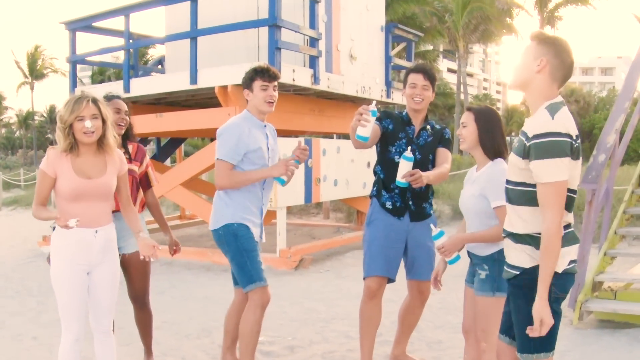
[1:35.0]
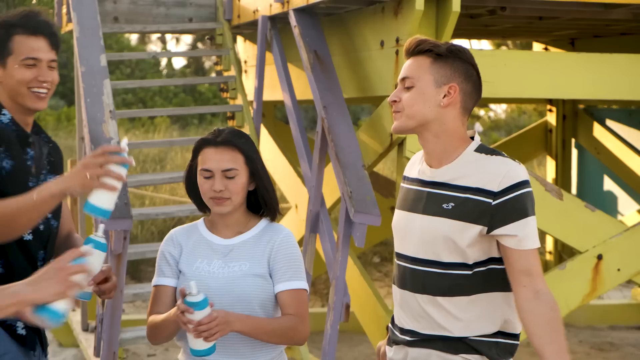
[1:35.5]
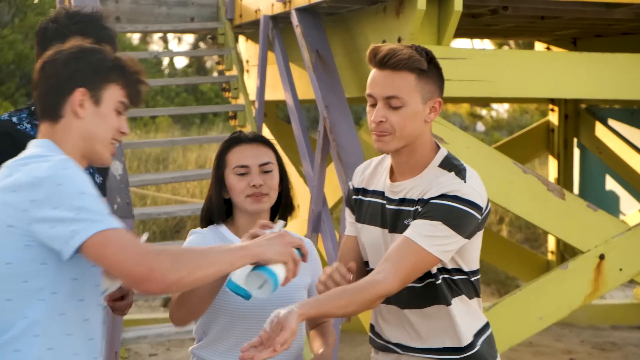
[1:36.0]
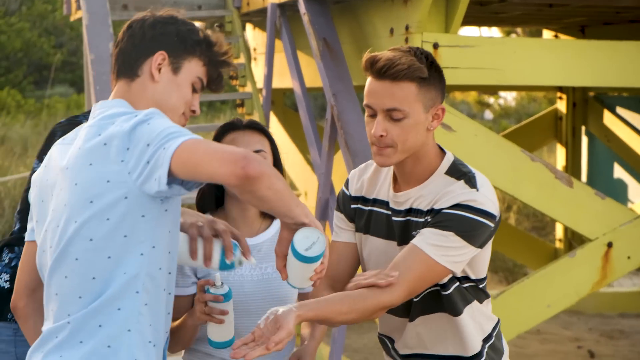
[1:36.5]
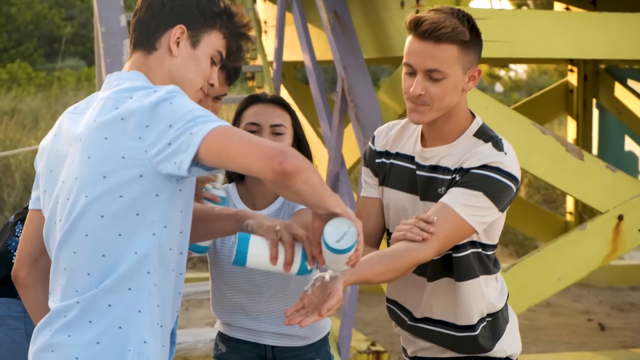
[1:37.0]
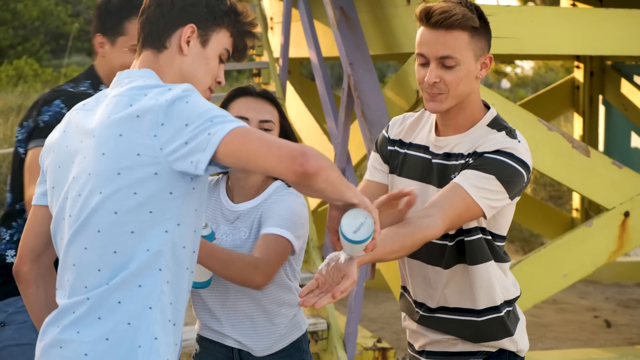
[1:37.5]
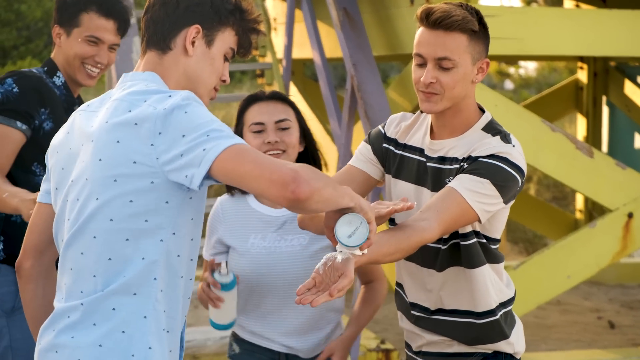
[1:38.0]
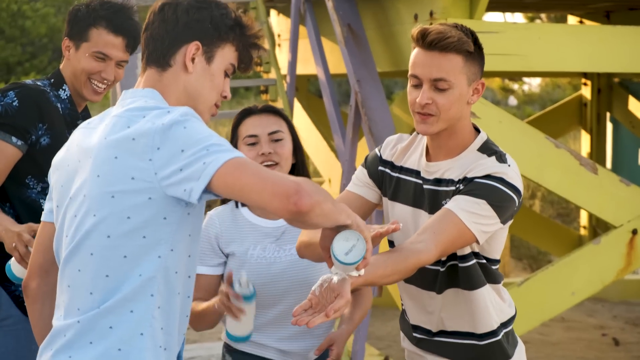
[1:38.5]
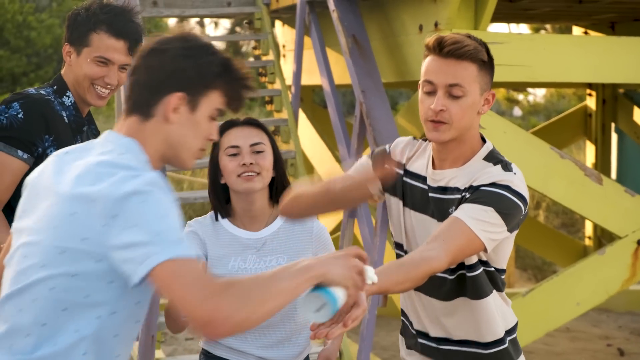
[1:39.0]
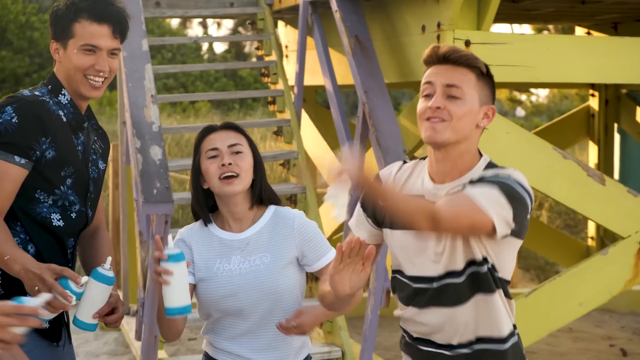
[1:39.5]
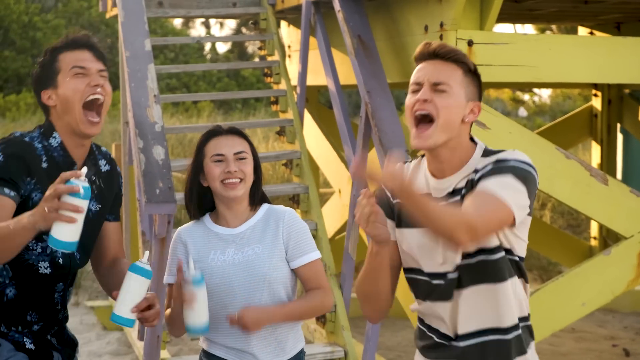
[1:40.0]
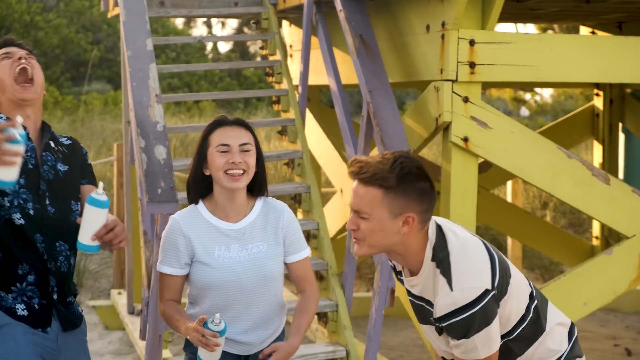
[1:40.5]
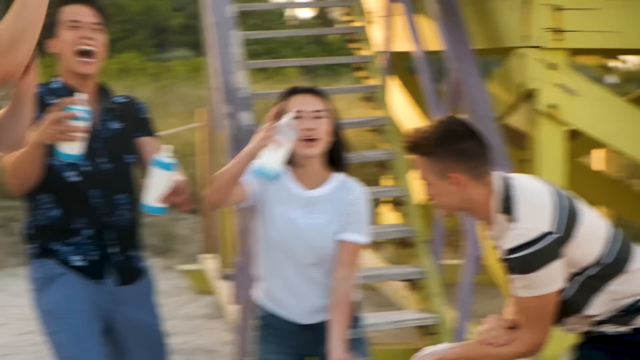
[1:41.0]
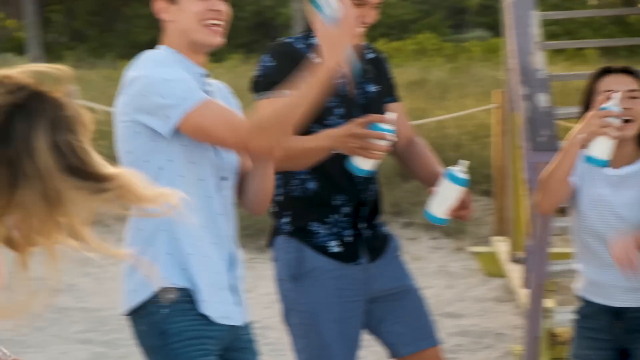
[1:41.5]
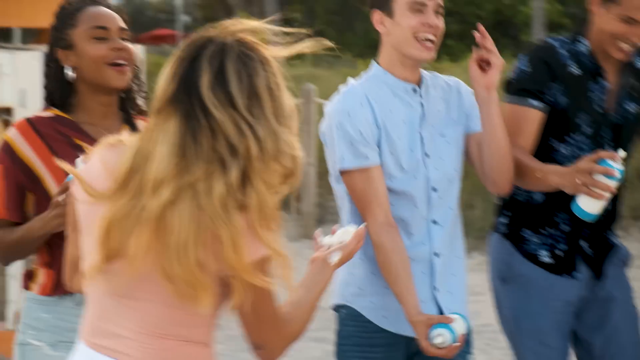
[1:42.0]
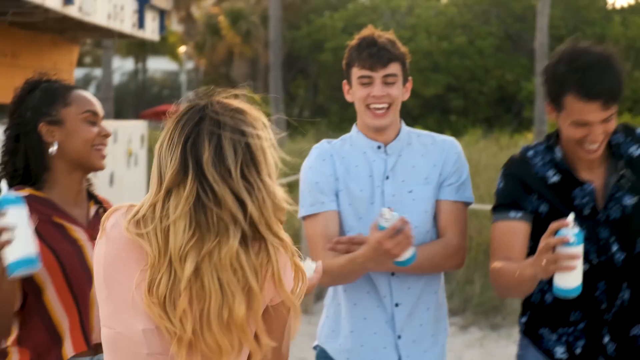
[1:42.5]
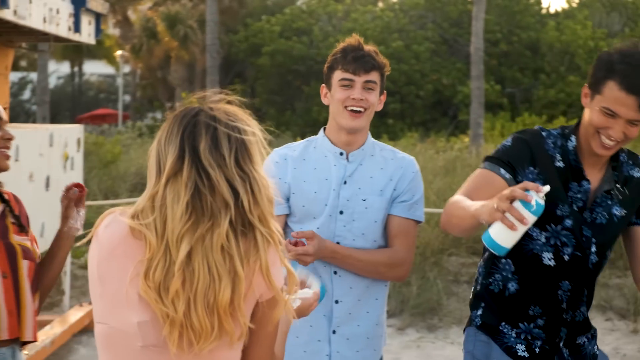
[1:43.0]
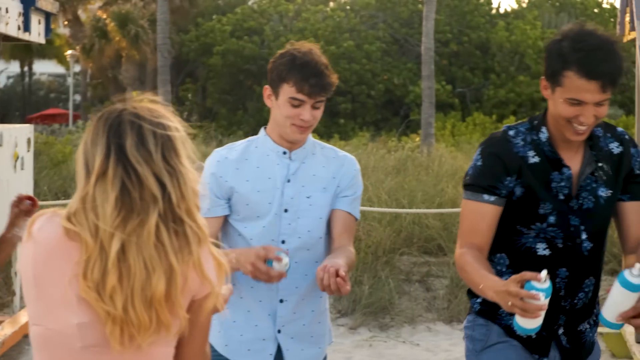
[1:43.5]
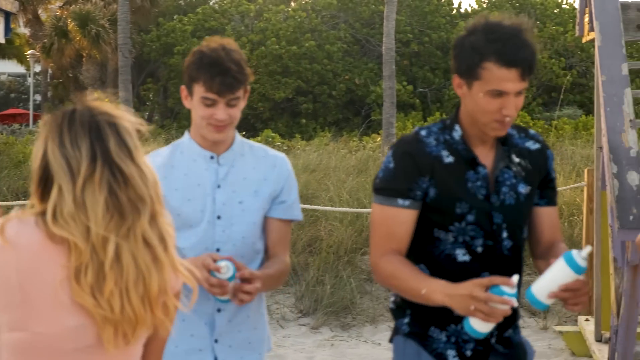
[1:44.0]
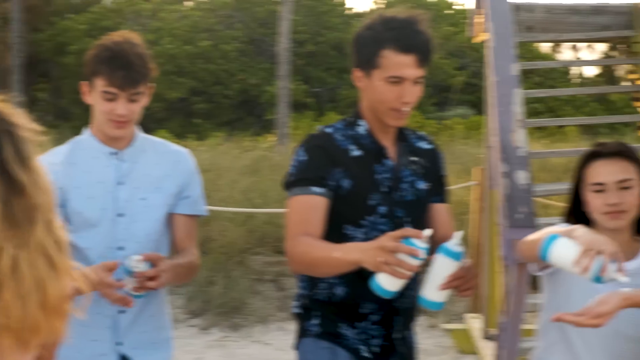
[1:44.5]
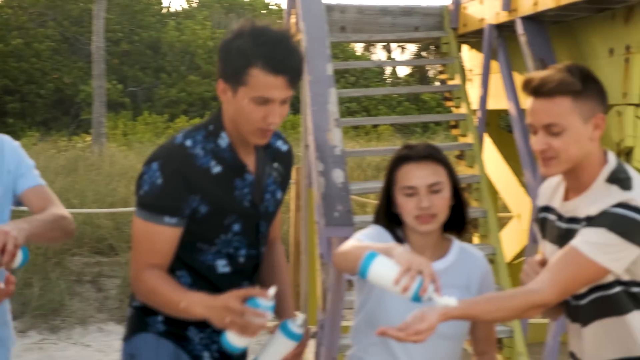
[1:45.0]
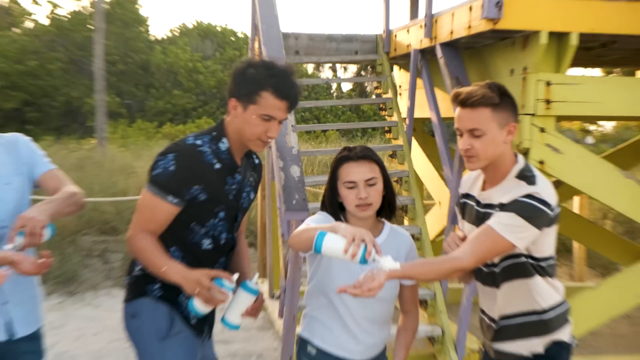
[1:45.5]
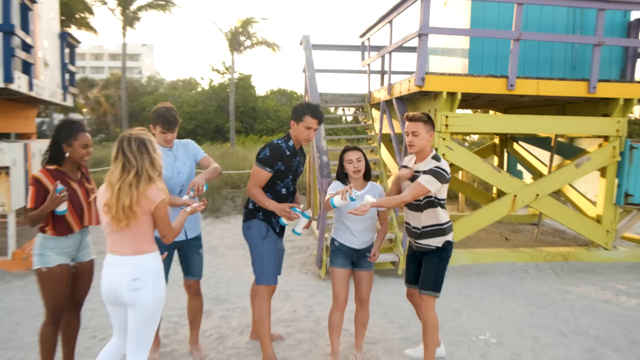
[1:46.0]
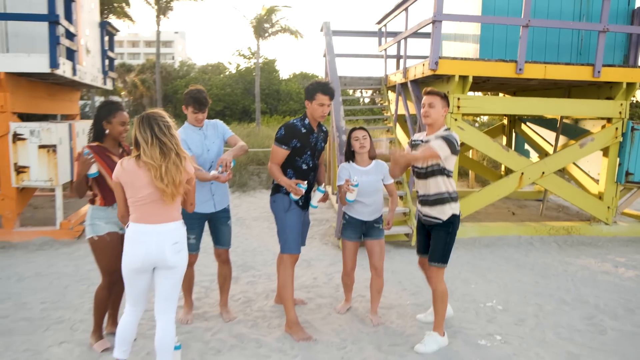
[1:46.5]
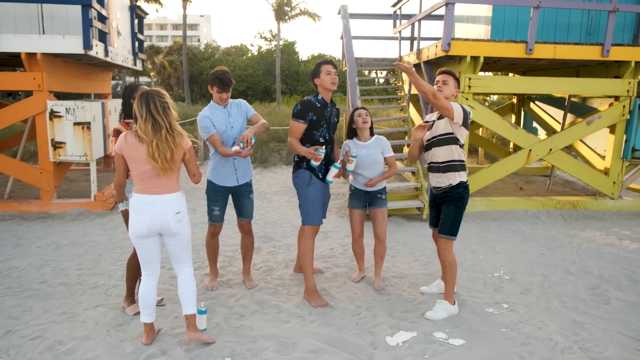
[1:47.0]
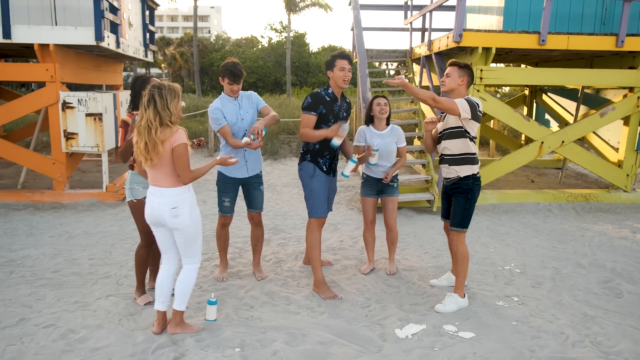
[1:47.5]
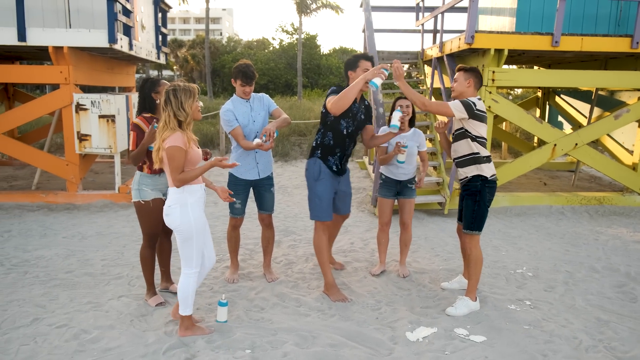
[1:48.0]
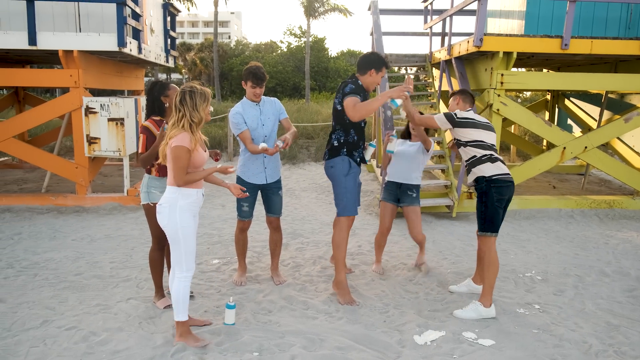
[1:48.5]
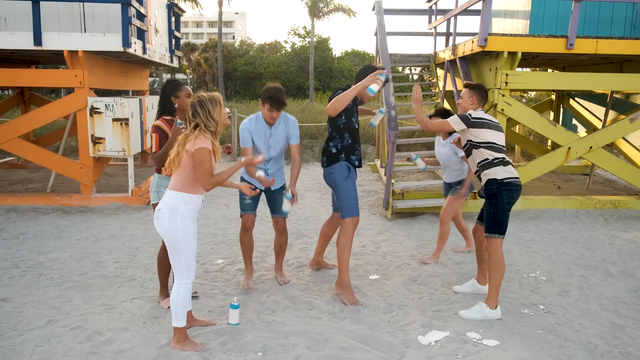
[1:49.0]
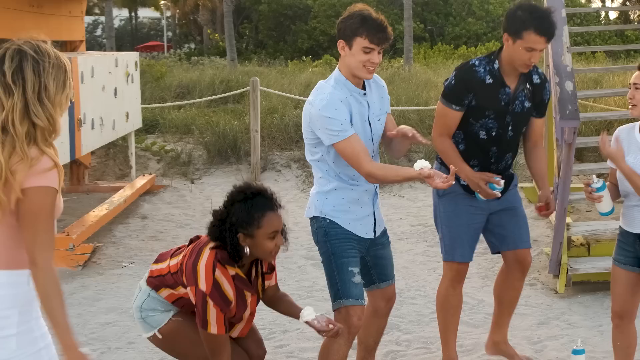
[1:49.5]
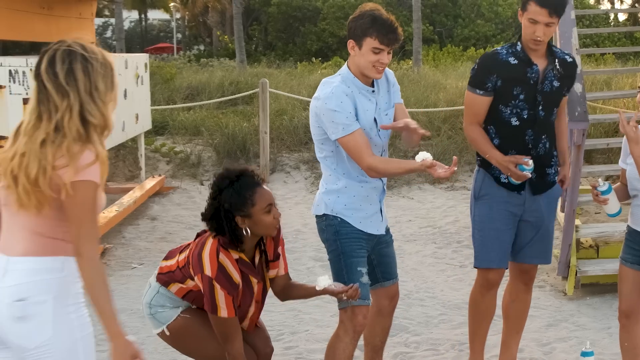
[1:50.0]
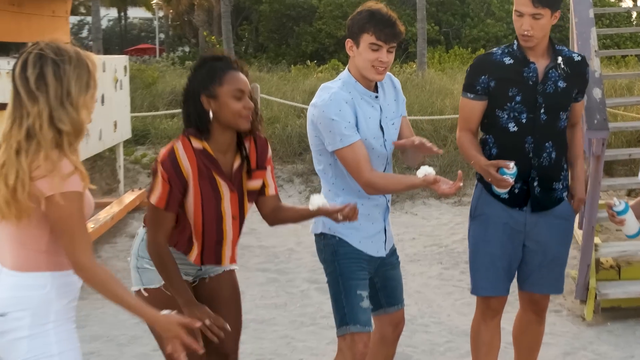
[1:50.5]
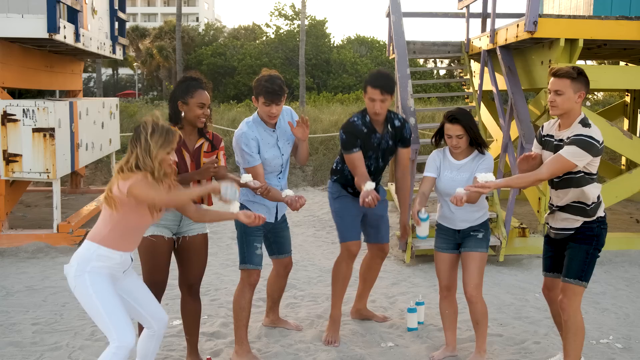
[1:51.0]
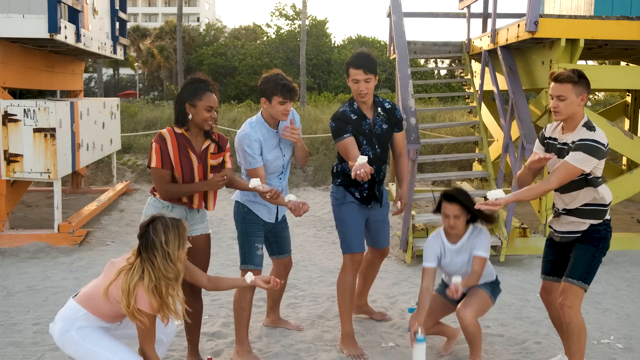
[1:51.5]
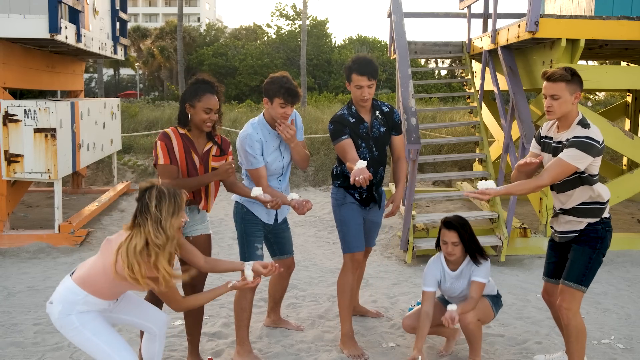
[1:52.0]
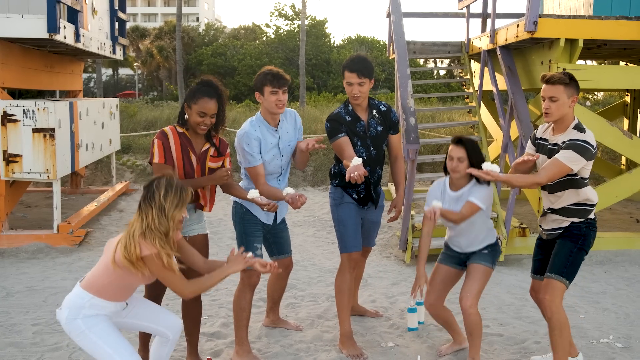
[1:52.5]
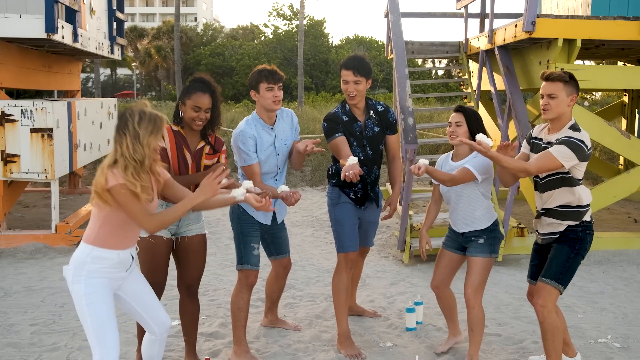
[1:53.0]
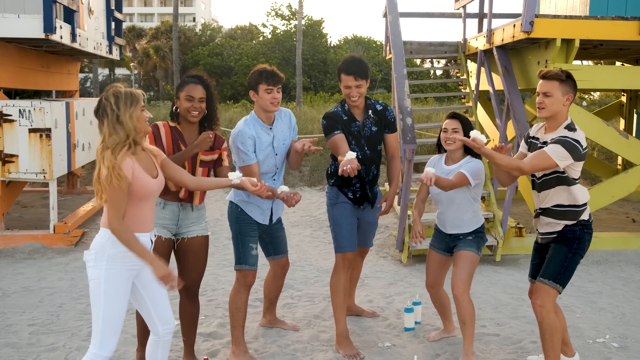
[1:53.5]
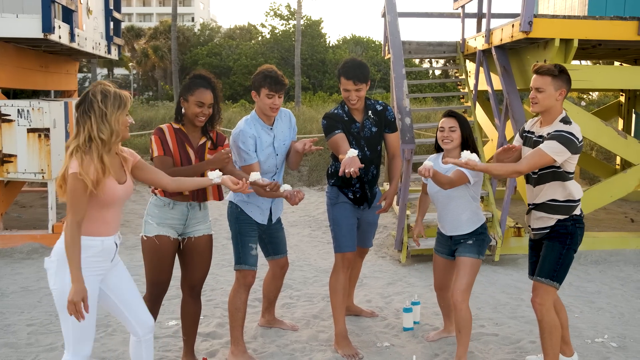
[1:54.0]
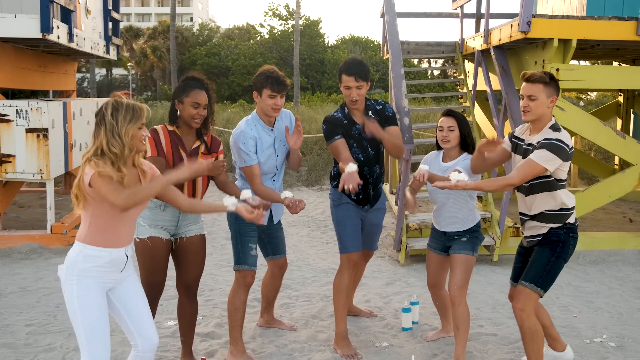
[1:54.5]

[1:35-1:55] The participants are all helping Damon do the challenge. Hayes puts another dollop of whipped cream on Damon's arm, and as Damon raises his arm and hits it with his other hand, the whipped cream falls immediately to the ground without flying; he is seen saying "ow" from slapping his arm. The participants laugh, and Haley puts a small dollop of whipped cream on Damon's arm for another try, but as he raises his arm the dollop again falls into the sand. He then motions as if to put whatever whipped cream is left on his arm onto Haley's face, and she backs away. All the participants laugh. Finally, all the participants and the two hosts line up, each with a dollop of whipped cream on the inside of their wrist, preparing to do the challenge in unison; they each raise their arm and slap it, and the results are not yet shown.